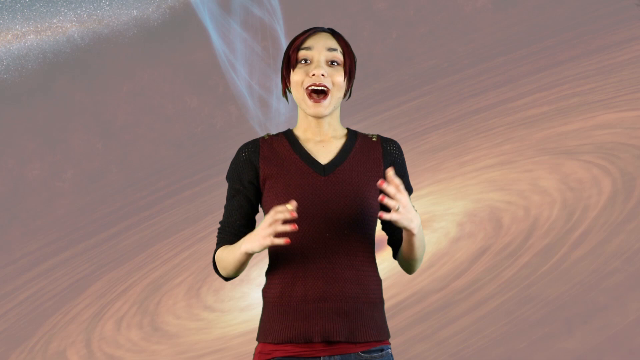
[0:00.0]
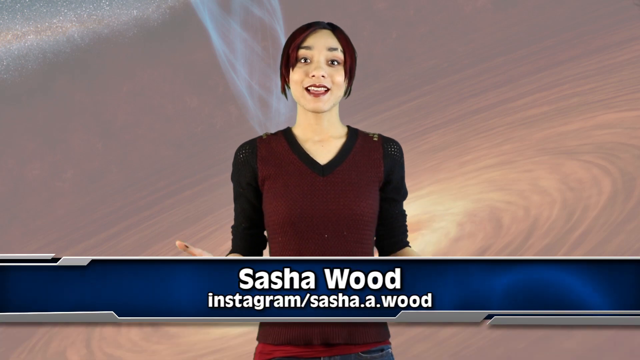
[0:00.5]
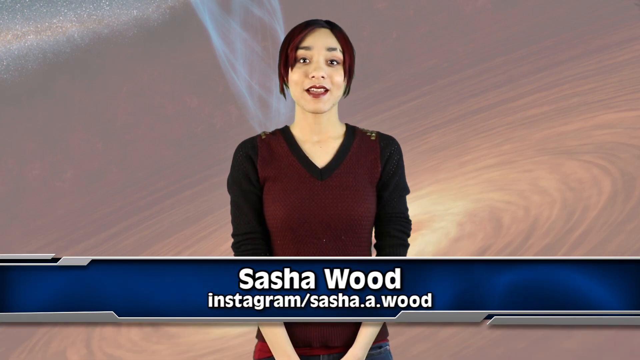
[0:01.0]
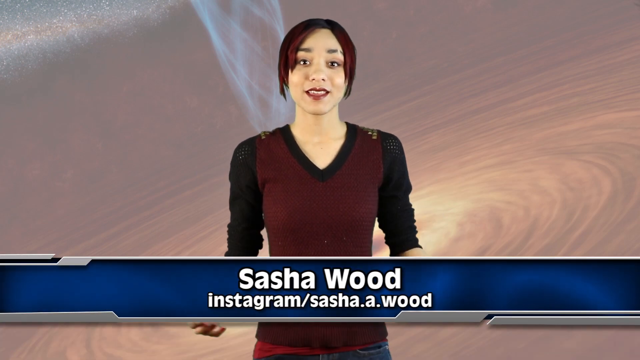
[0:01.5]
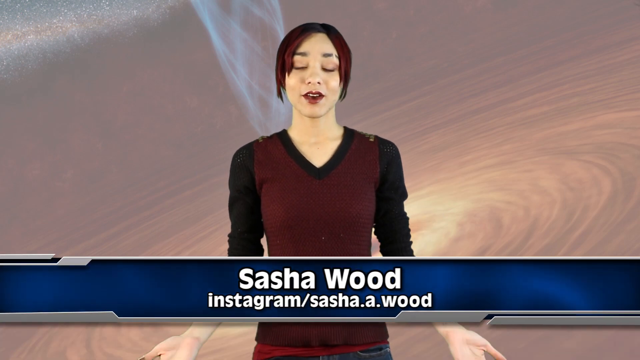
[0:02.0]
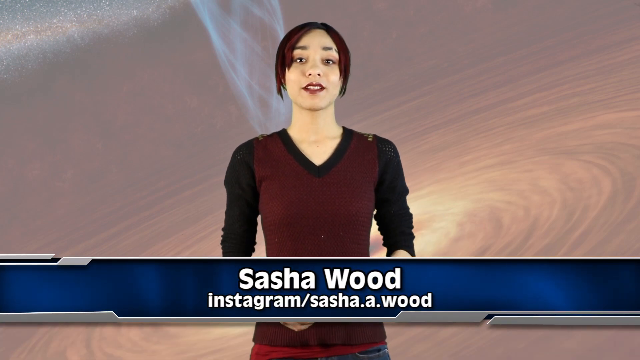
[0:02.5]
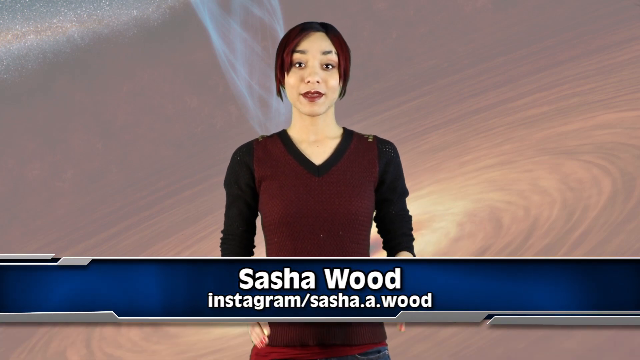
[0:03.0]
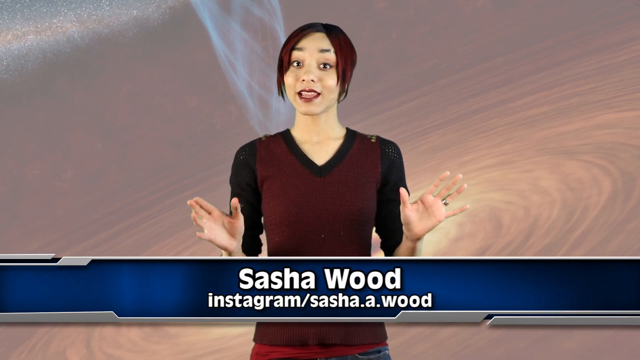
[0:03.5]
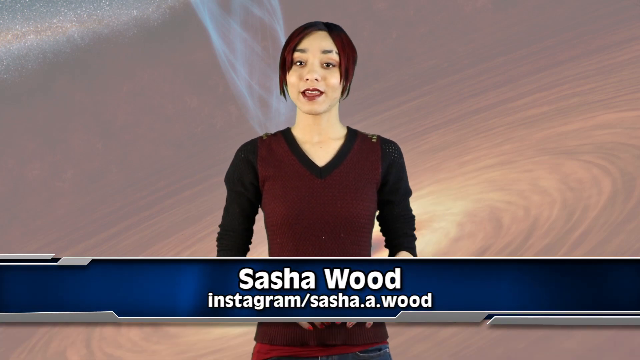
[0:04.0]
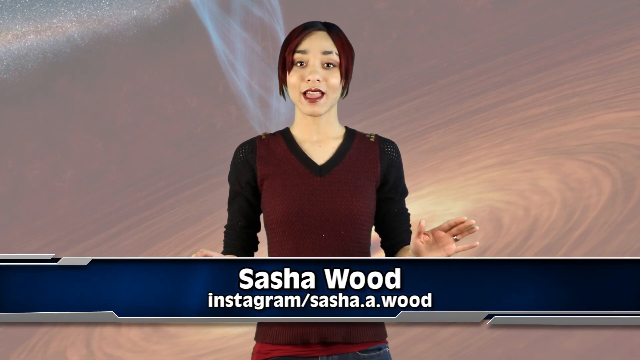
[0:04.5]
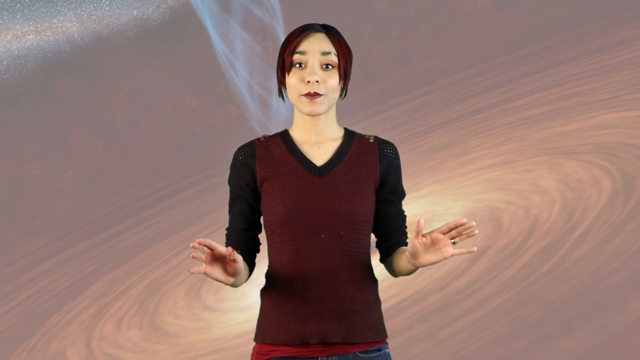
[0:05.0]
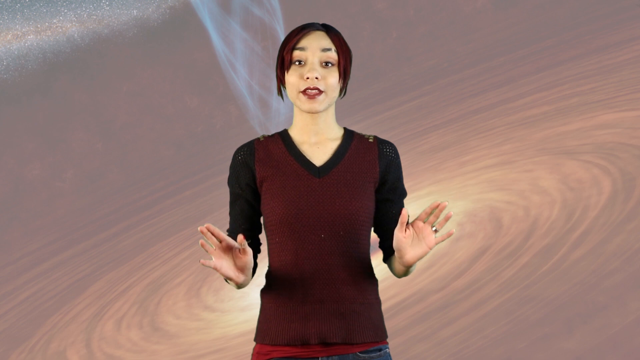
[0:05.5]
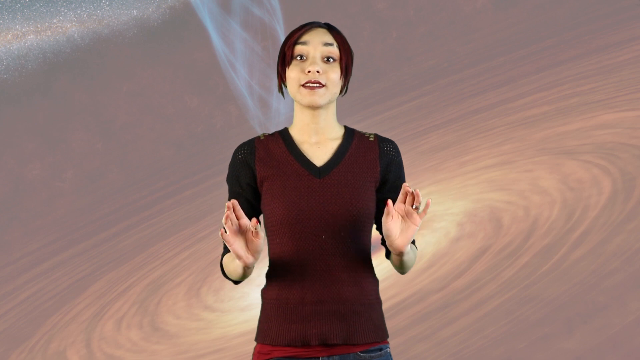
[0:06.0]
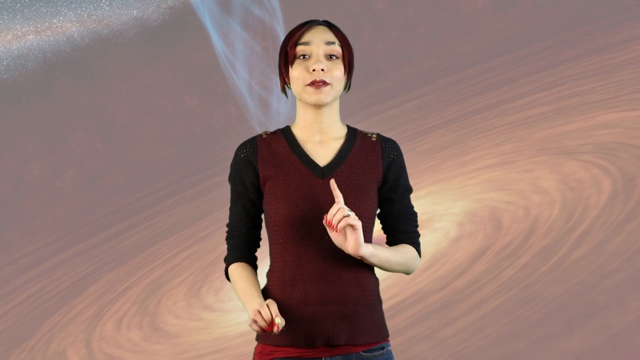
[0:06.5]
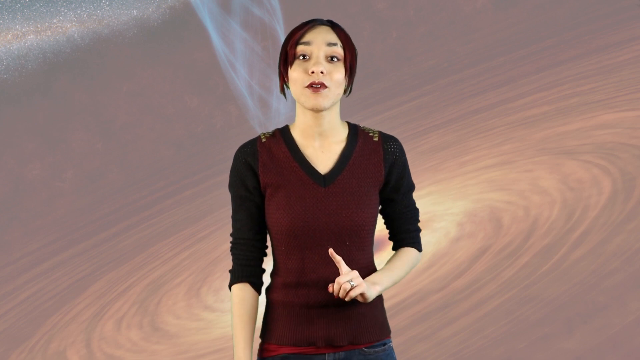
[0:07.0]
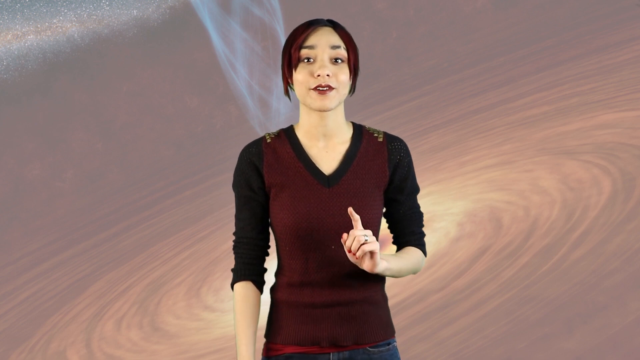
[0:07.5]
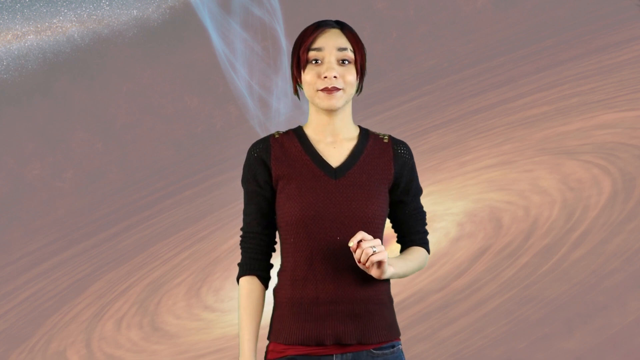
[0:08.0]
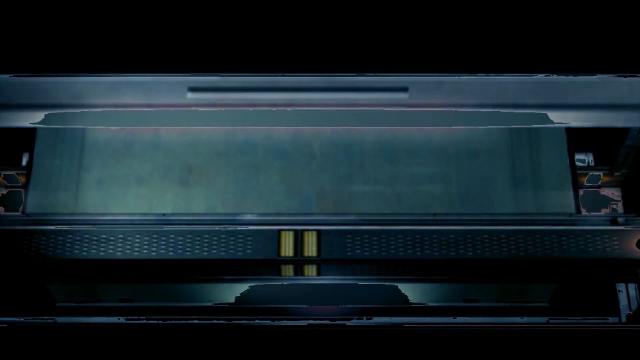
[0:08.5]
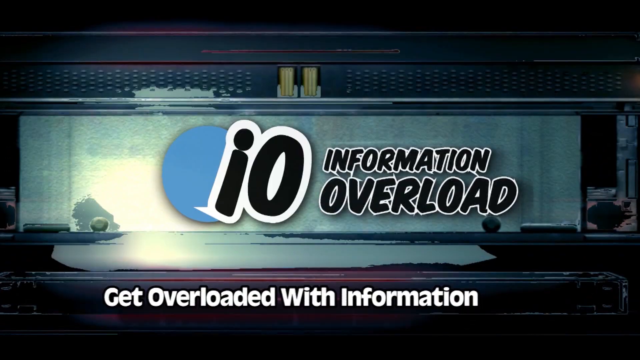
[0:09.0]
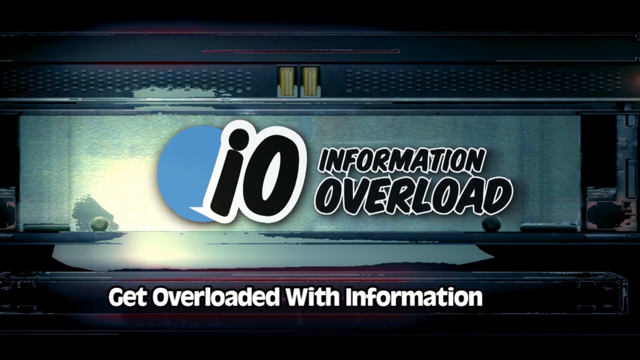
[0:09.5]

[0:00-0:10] The background kind of looks spacey at the bottom, with what almost looks like a light just below the girl's right elbow, atmosphere spreading out from it, and a light beam shooting up over her shoulder on the left side; the top left corner has kind of a galaxy look. She has short red hair that comes just down to her cheek, a red shirt with black sleeves and a black V-neck, and light makeup. A blue banner comes up across the bottom with white text reading "Sasha Wood" and, underneath, "Instagram/Sasha.a.wood". Her hands start down in front of her; she brings them out to the sides, then up in front of her with palms toward the camera. She drops her left hand and points a finger of her right hand up as she talks, moving up and down a little. Then a metallic-looking thing comes across the center with the text "10 information overload", and below it, across the bottom, "get overloaded with information".